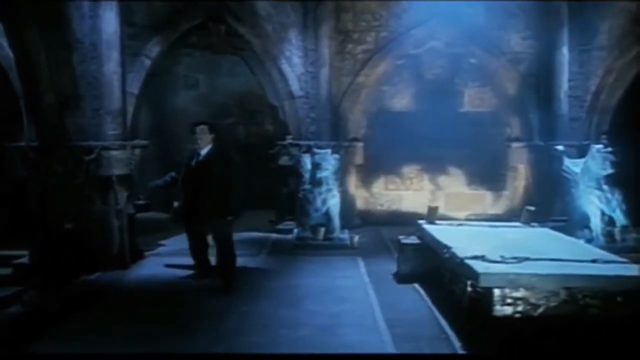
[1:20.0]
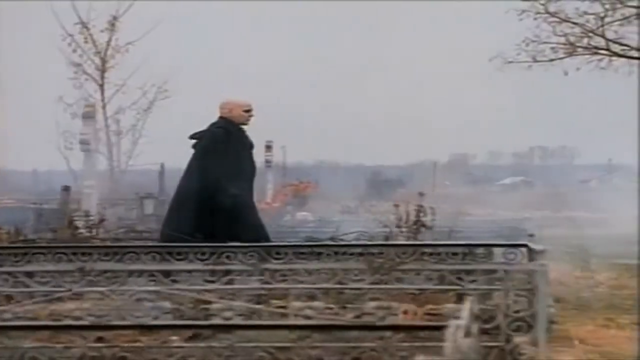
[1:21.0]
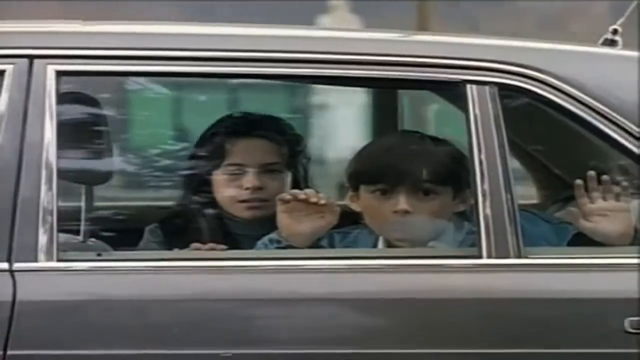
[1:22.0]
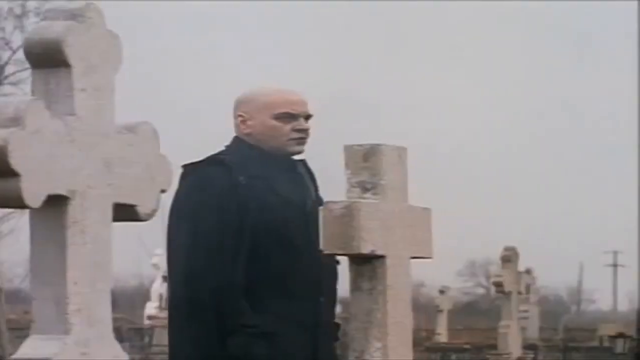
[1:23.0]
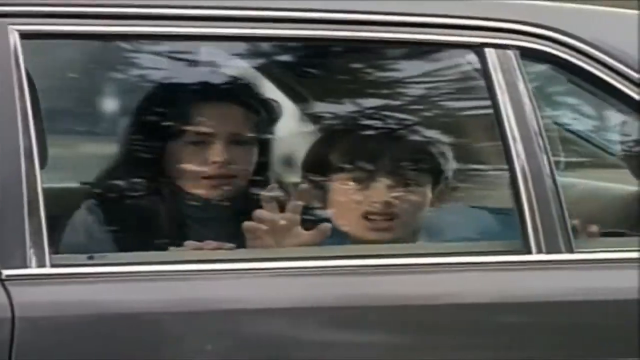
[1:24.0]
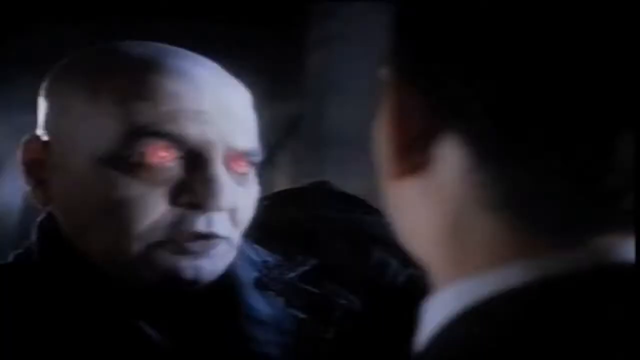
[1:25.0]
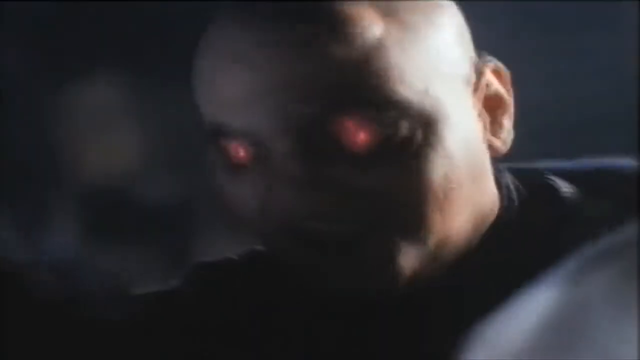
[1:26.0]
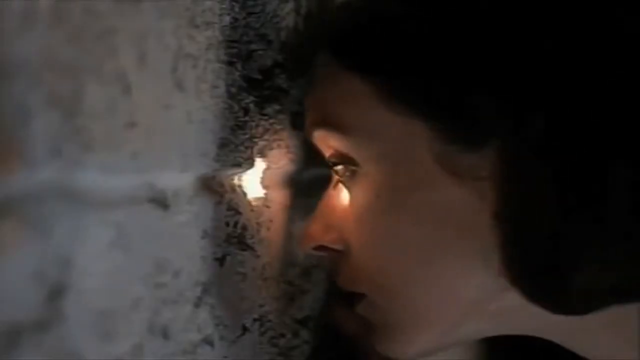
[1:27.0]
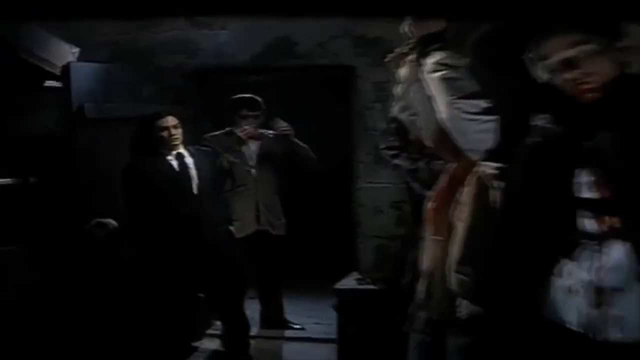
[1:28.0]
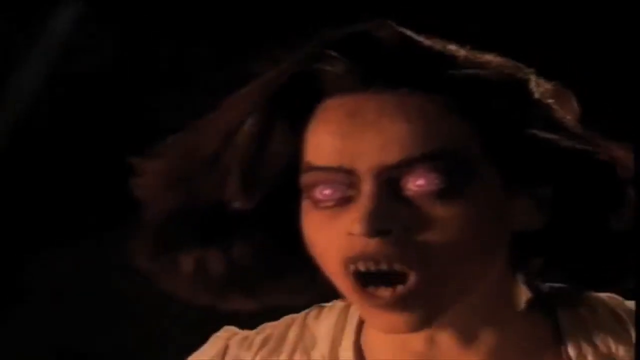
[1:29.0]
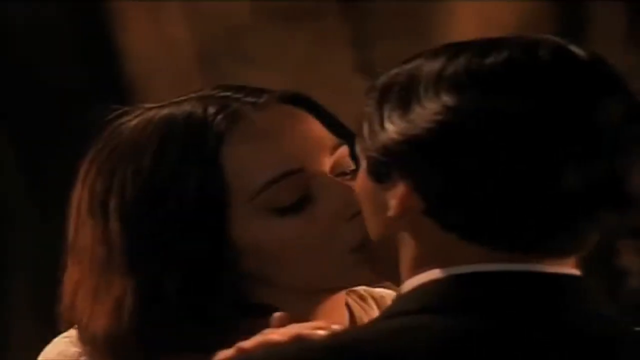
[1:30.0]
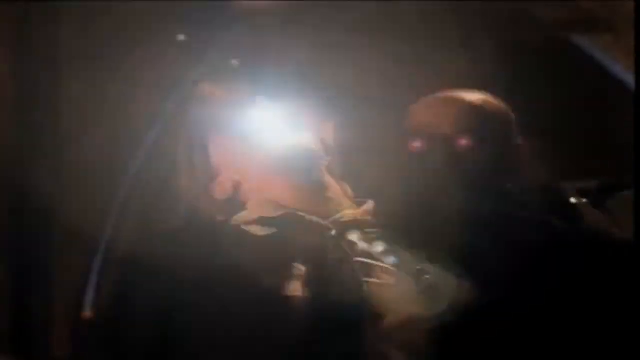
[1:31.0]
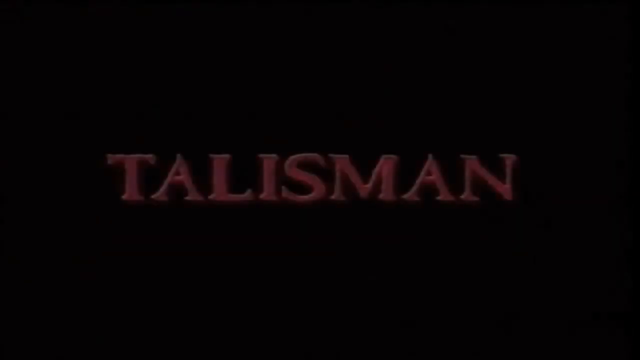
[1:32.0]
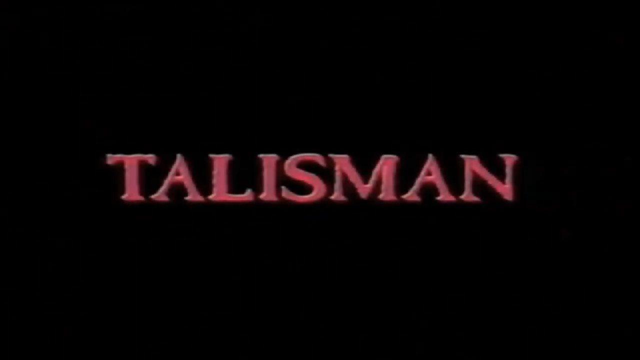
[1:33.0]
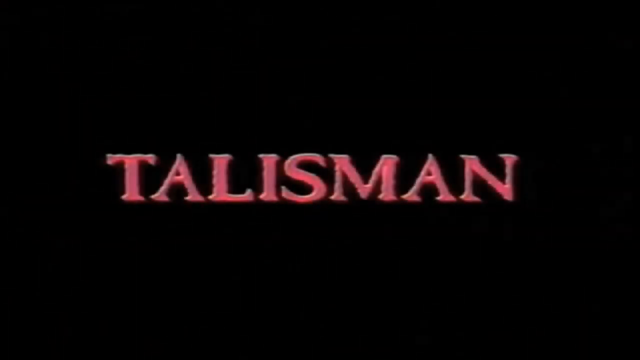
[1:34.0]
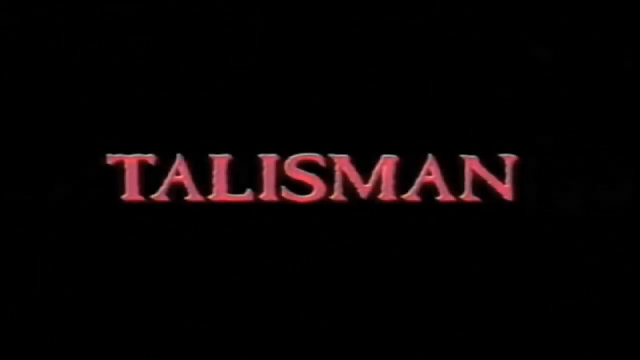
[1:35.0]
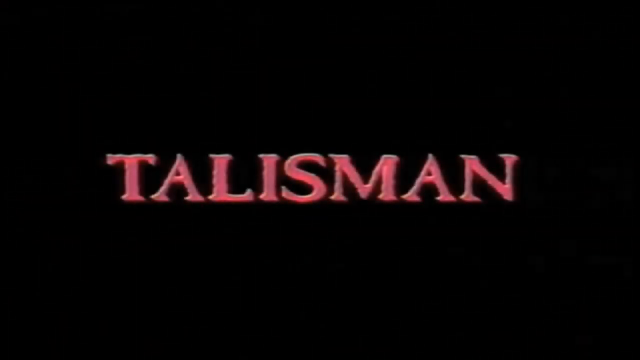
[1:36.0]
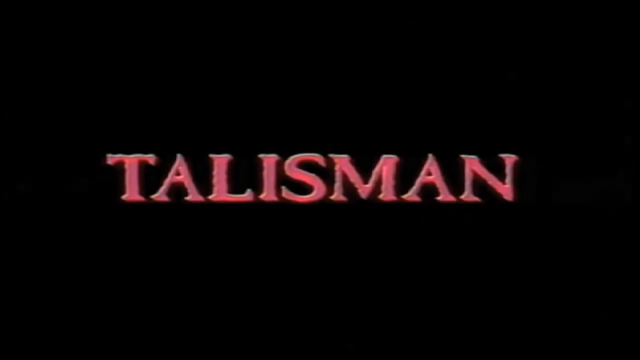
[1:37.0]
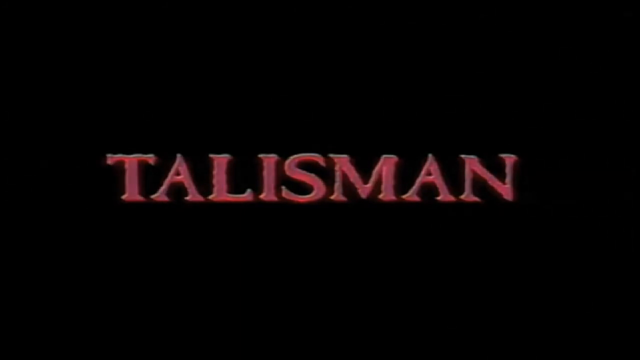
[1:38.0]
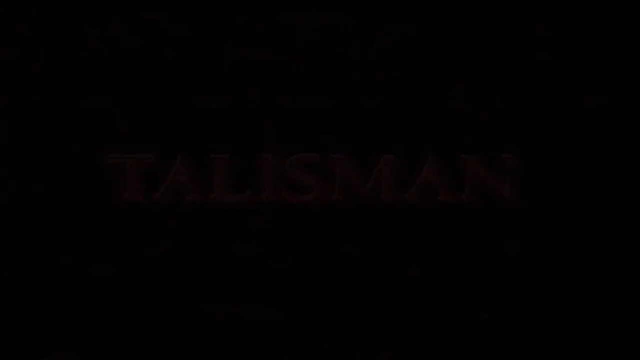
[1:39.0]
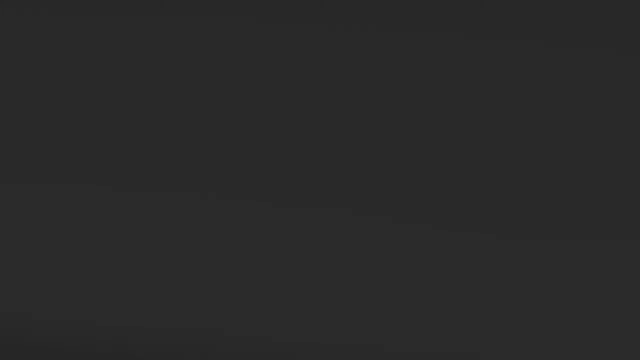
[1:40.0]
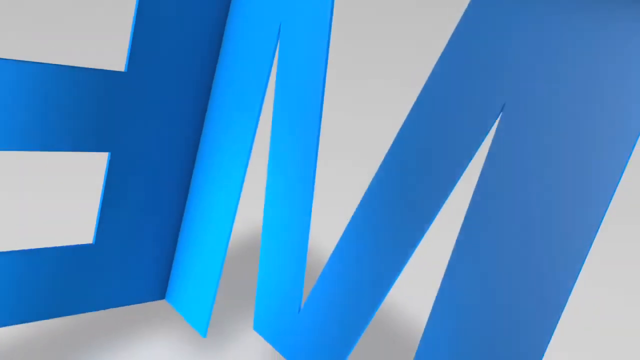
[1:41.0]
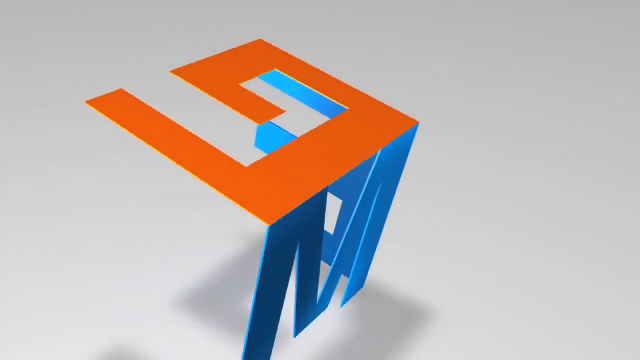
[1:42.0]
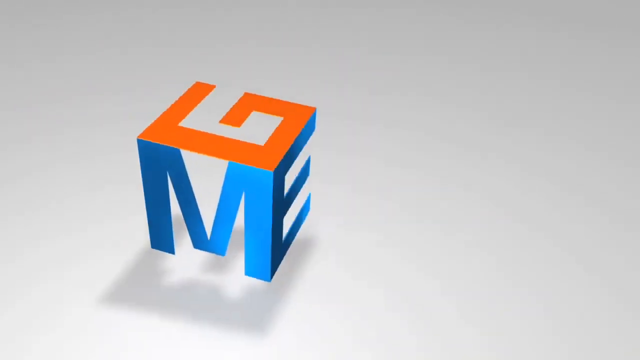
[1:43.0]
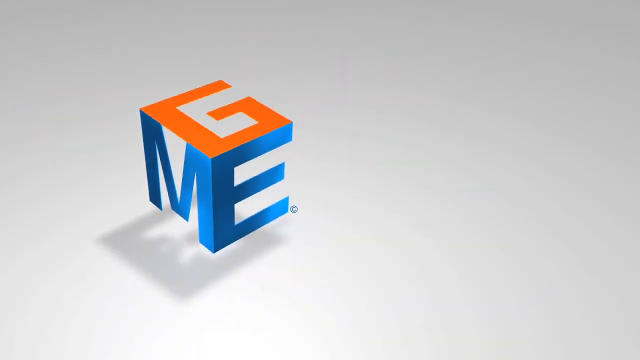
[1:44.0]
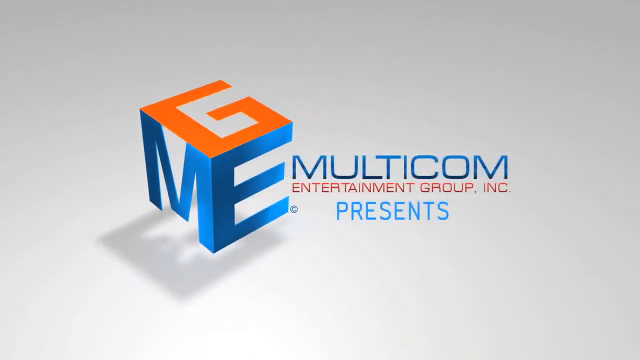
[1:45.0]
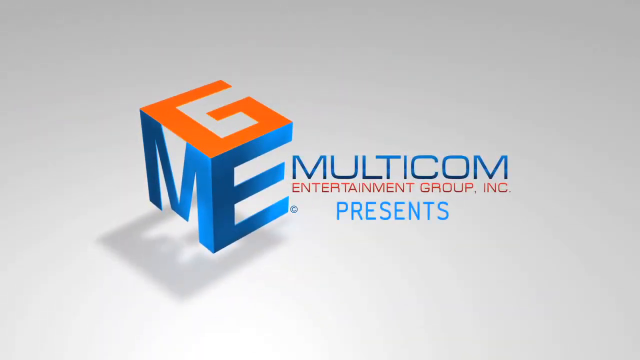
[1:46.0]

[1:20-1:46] Someone approaches the house, and the bald man with the flowing cape walks through a graveyard with headstones that appears to be on the house's front property. Two children in the backseat of a car watch him and tap on the window, for reasons that are unclear. The video flashes to the girl, then shows a picture of the talisman, which has a demonic face and red eyes. The girl kisses a man. The bald man with red eyes stabs someone in the back with something unclear, possibly light. The movie is titled Talisman. At one point a man has flames coming out of his hands.